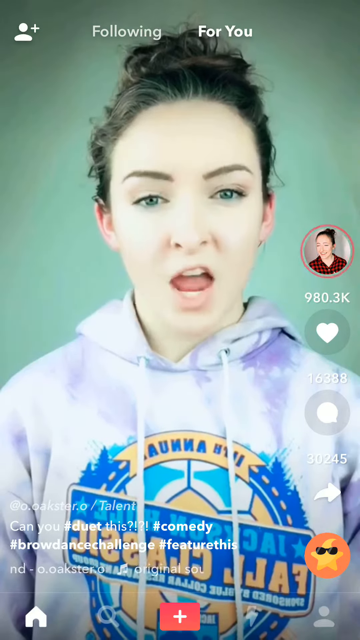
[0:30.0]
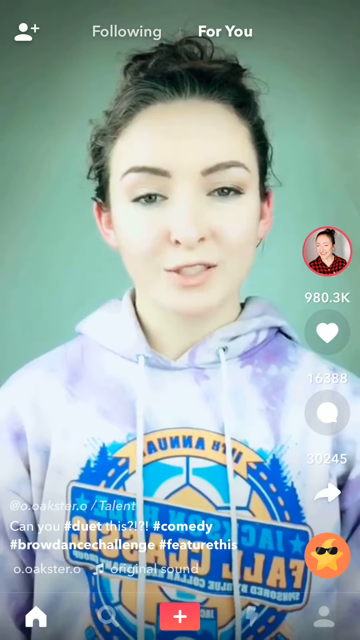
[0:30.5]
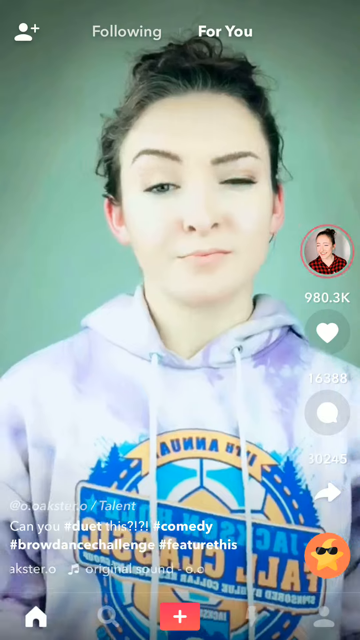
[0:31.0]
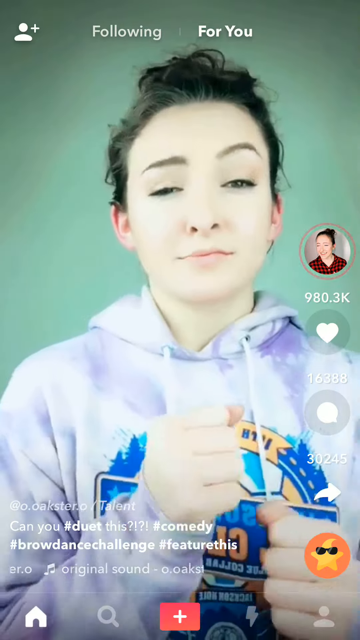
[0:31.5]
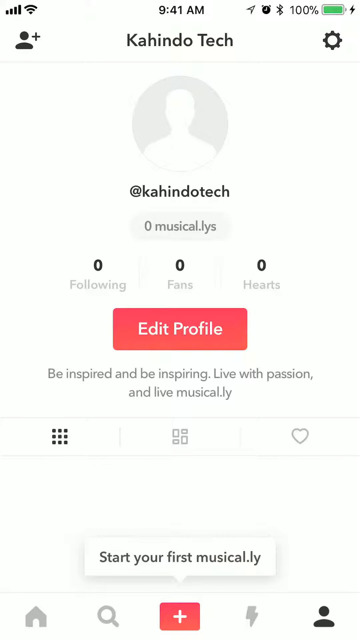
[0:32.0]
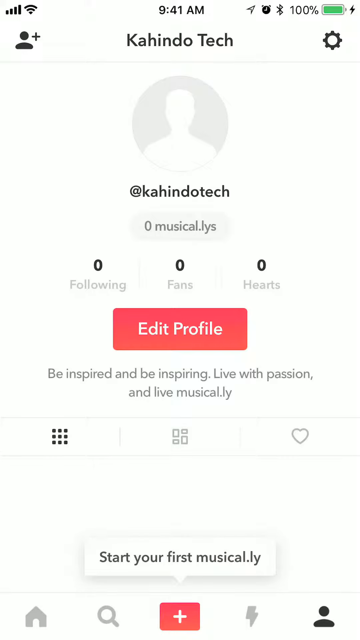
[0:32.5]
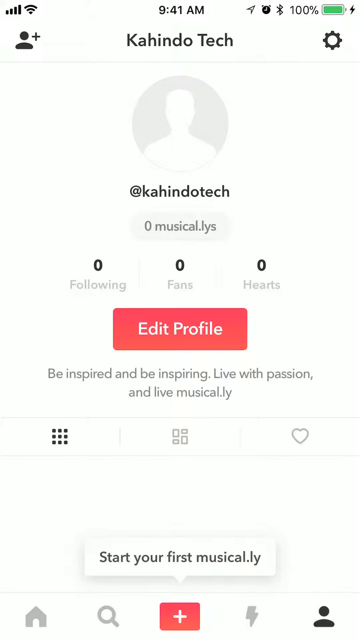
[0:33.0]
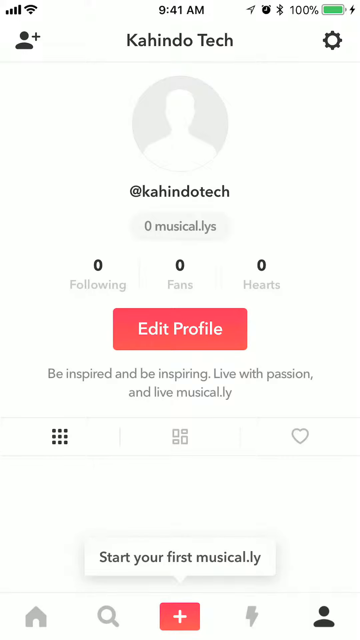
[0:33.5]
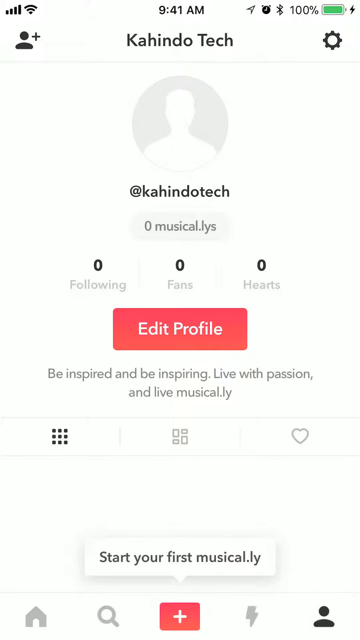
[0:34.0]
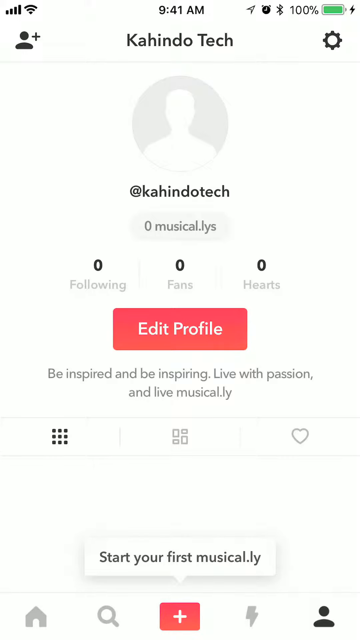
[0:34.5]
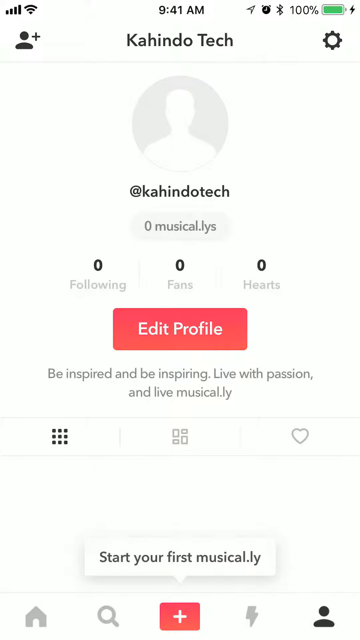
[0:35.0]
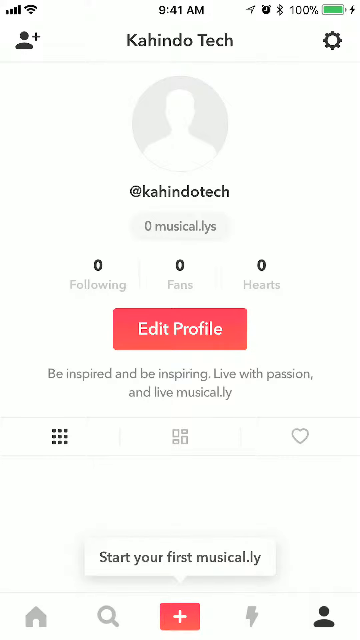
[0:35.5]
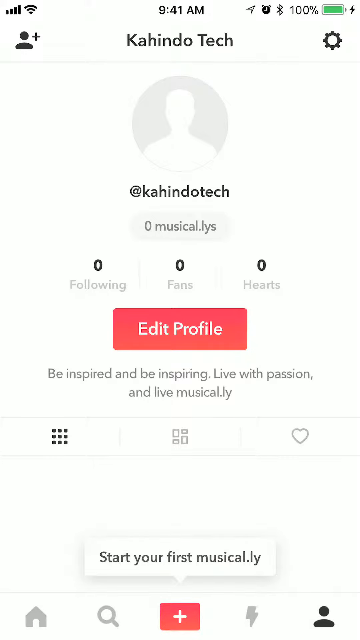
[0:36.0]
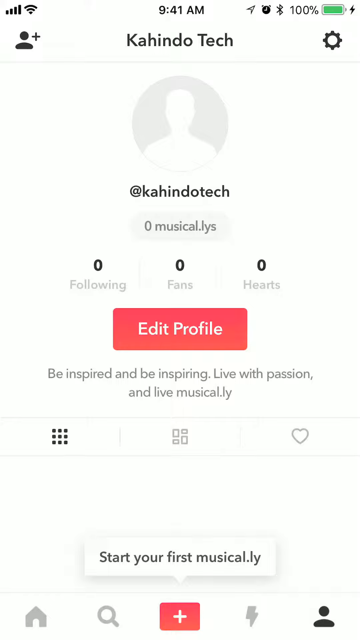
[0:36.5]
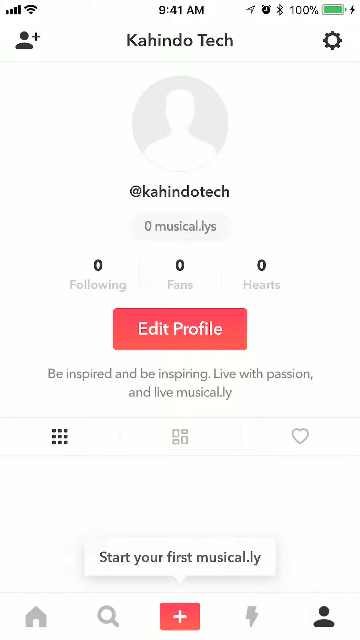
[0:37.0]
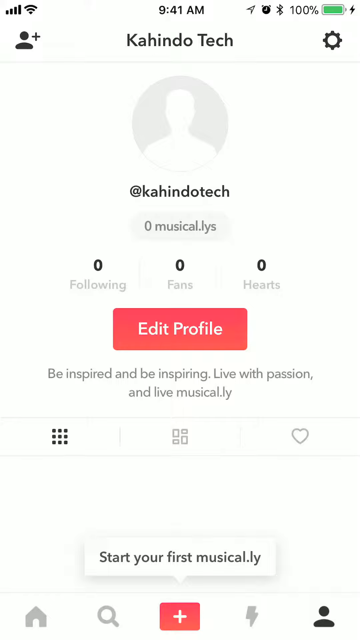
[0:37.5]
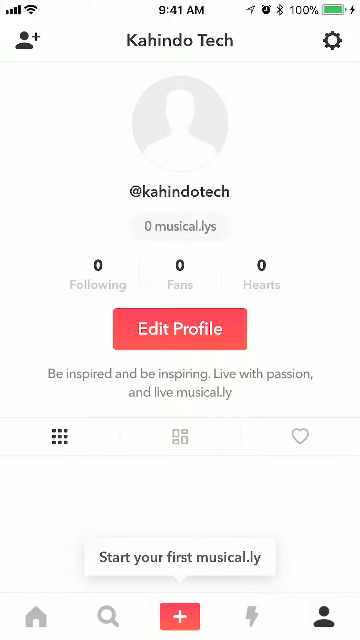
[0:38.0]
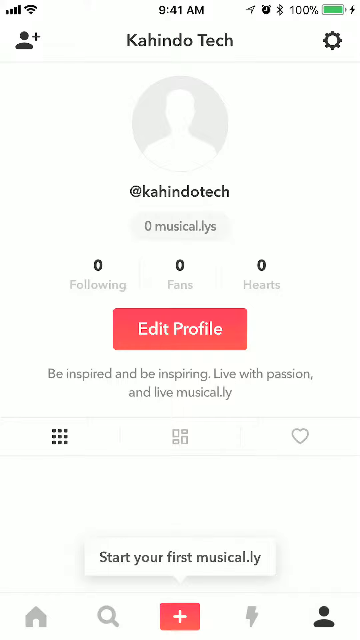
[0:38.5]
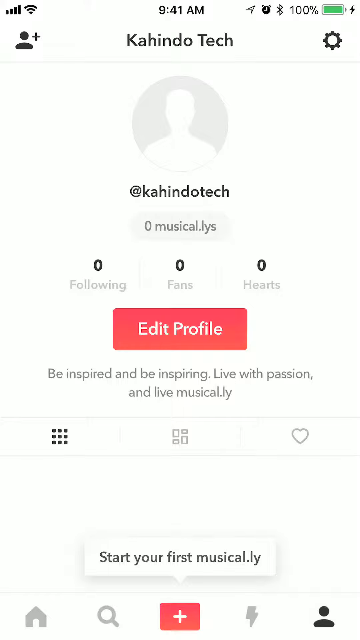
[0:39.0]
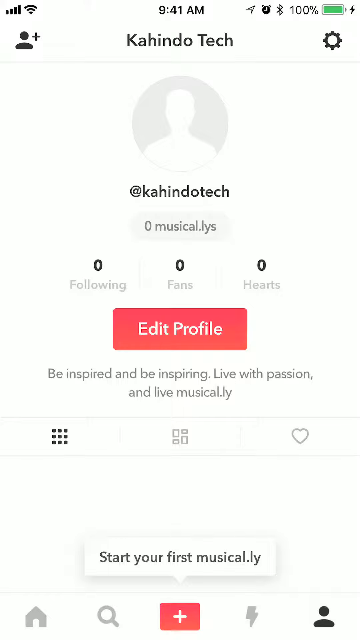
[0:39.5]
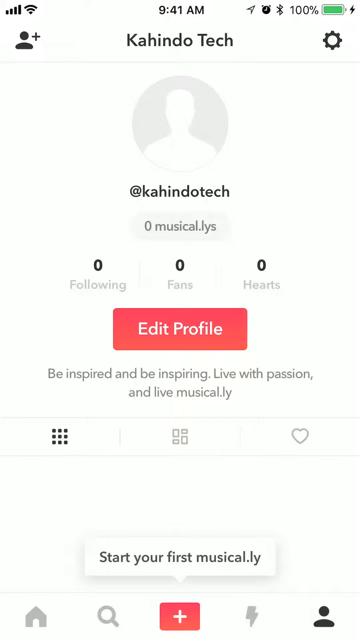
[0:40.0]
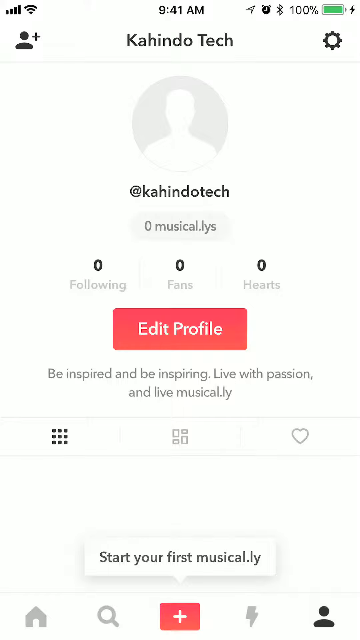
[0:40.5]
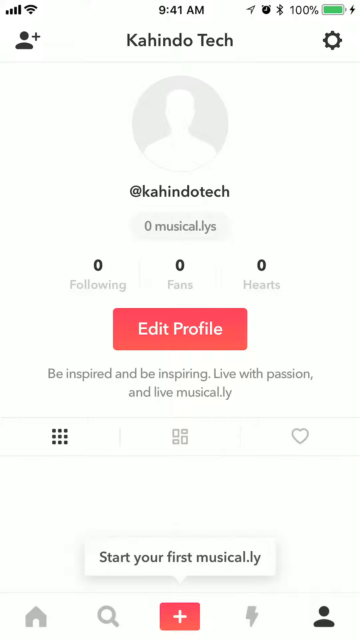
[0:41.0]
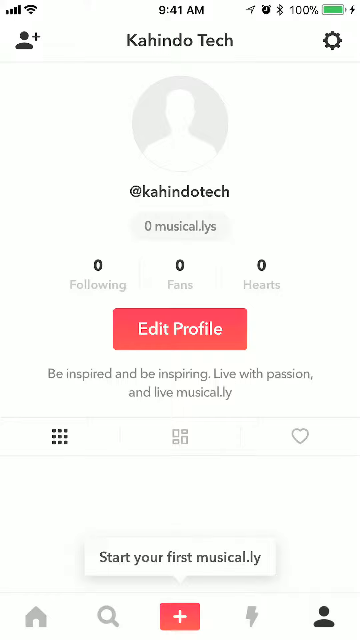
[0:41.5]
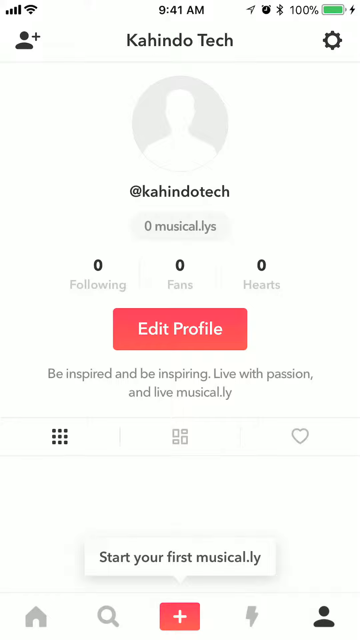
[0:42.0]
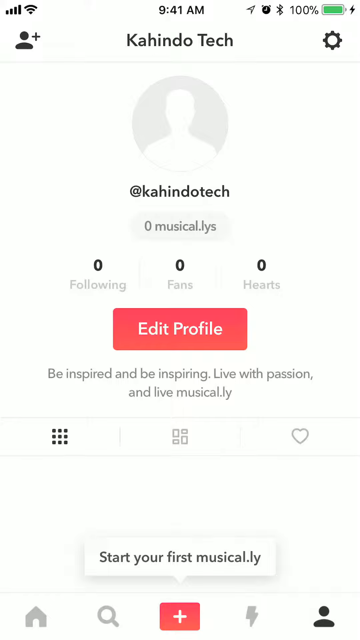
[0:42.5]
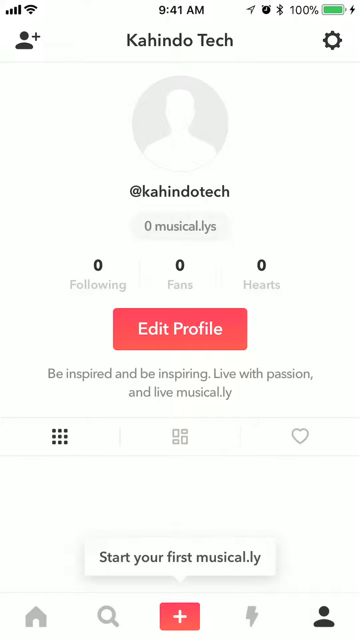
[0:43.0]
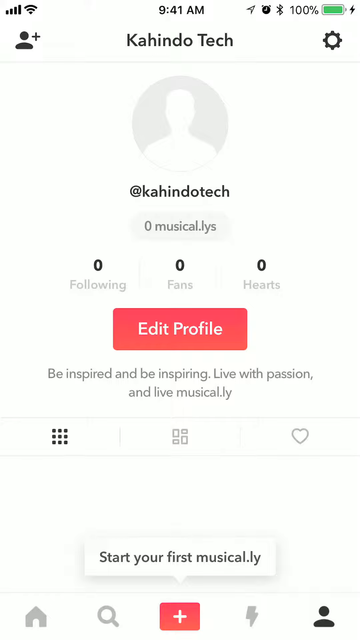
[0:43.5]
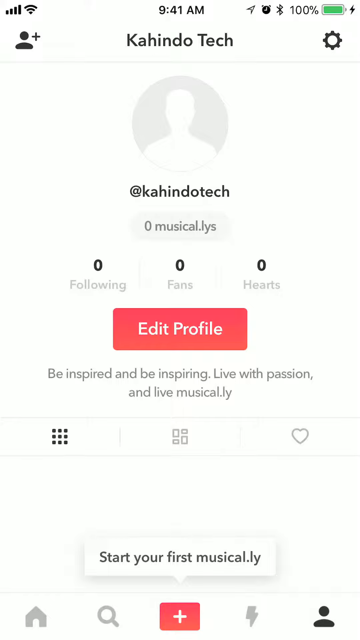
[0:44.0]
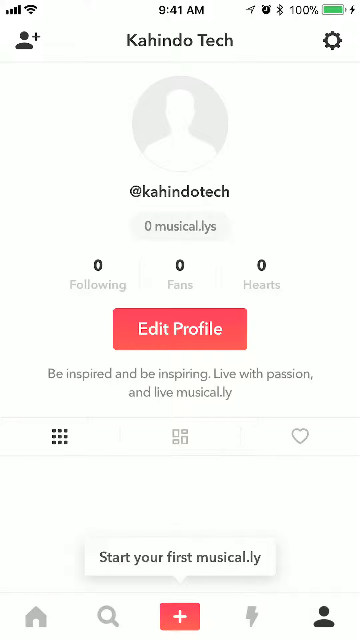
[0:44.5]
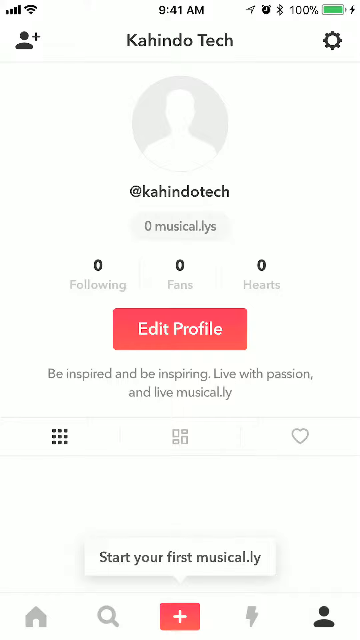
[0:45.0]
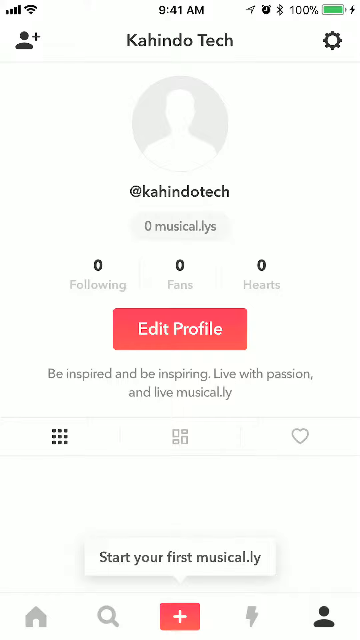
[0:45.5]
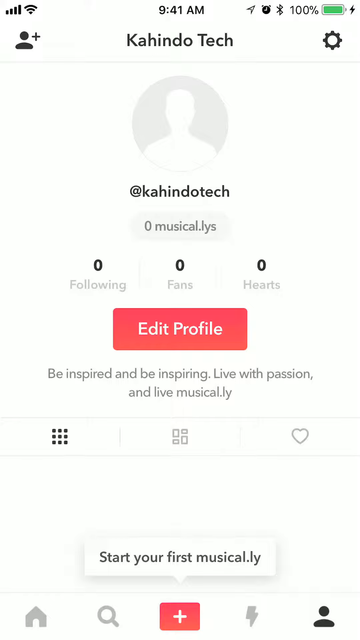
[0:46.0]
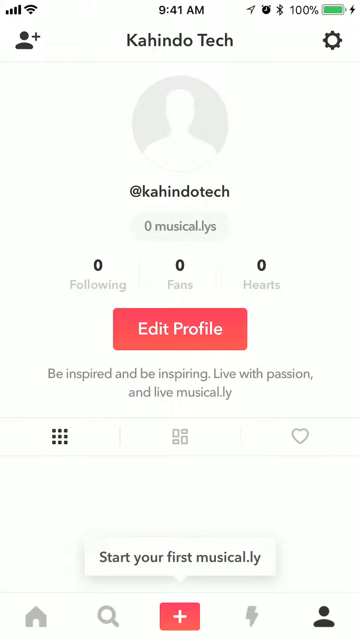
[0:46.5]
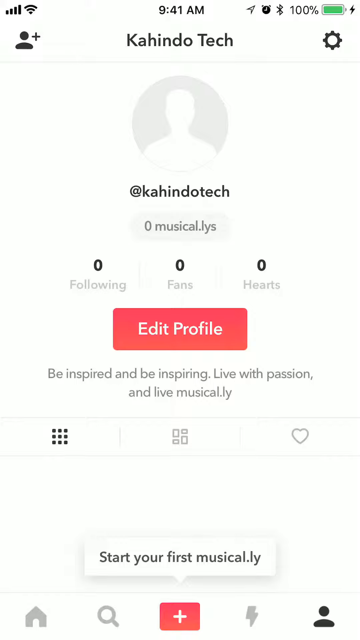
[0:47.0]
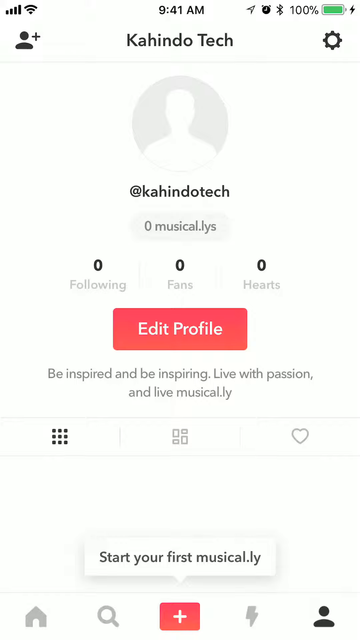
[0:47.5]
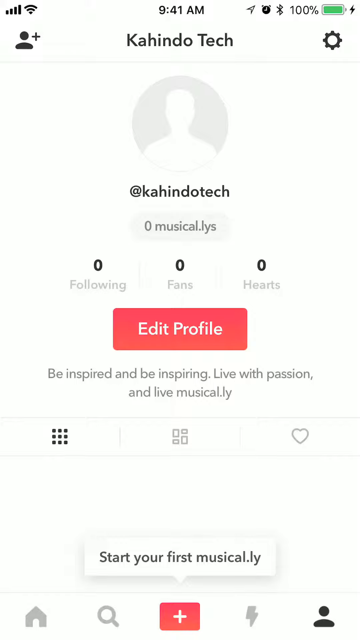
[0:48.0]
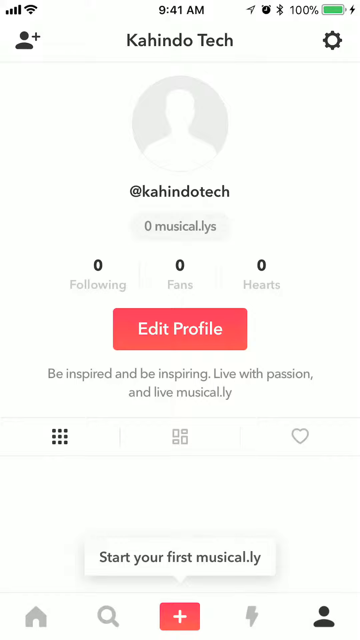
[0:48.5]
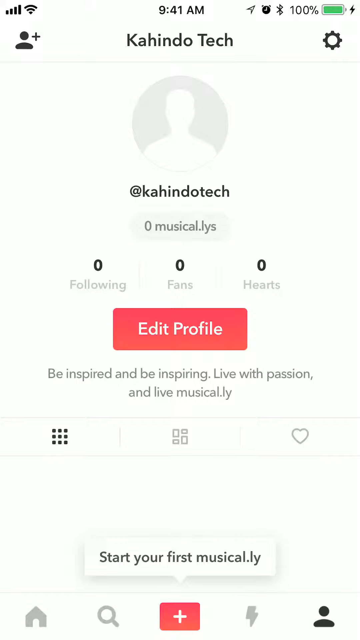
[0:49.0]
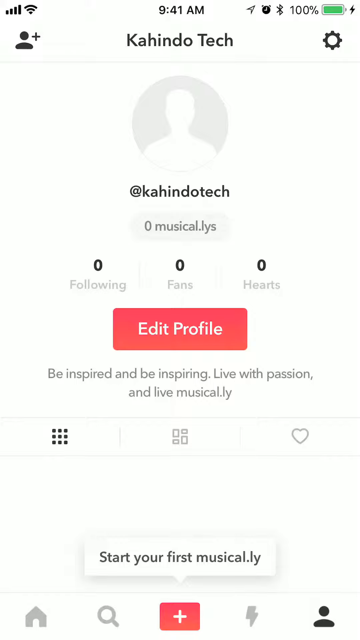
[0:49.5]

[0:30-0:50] The woman in the Musically app continues her eyebrow dance in the center of the screen, with a green background behind her. She wears a hoodie and her hair is dark. The likes on the video read 980,000, with 16,000 and 30,000 shown below. She moves her hands in a shimmy move, possibly going along with some music, and then moves her body and dances. At the top left is a logo of a person with a plus sign, and toward the right the screen says "following" and "for you". The video then cuts to the profile of Cajindotech showing zero following, zero fans and zero hearts. A red "edit profile" button appears, and below it the text reads "be inspired and be inspiring live with passion and live musically", followed by "start your first musically".